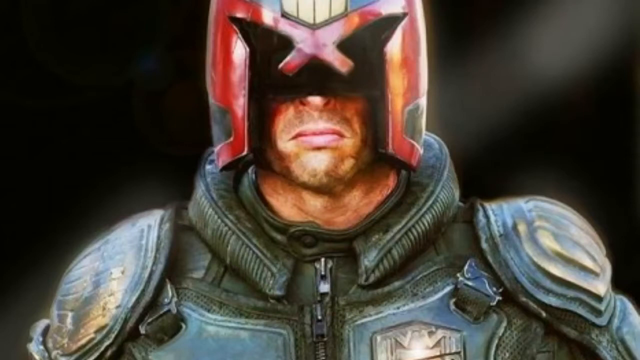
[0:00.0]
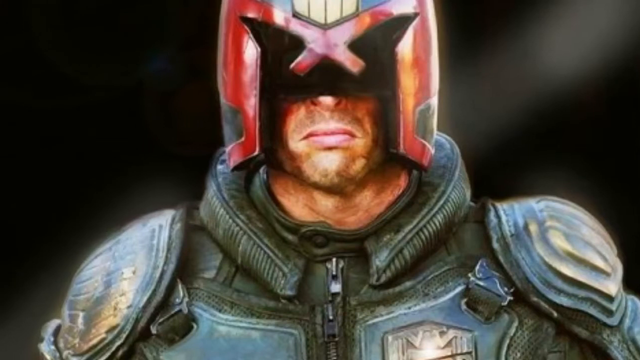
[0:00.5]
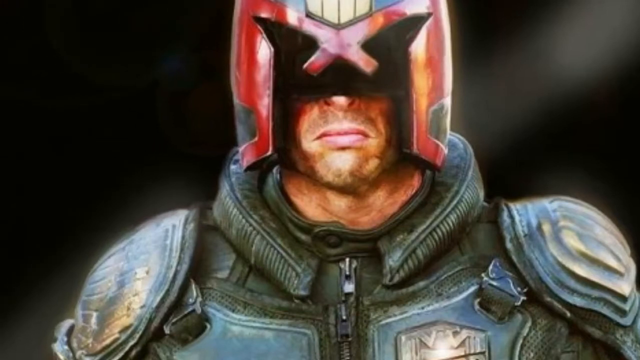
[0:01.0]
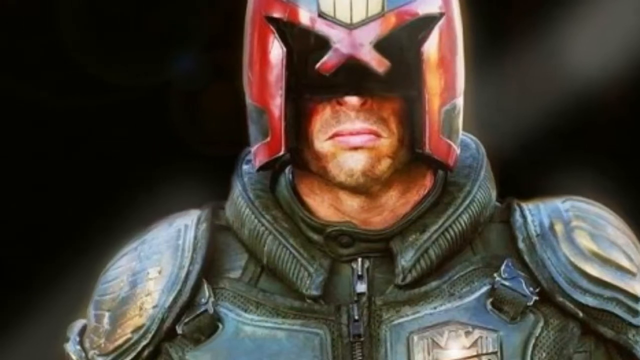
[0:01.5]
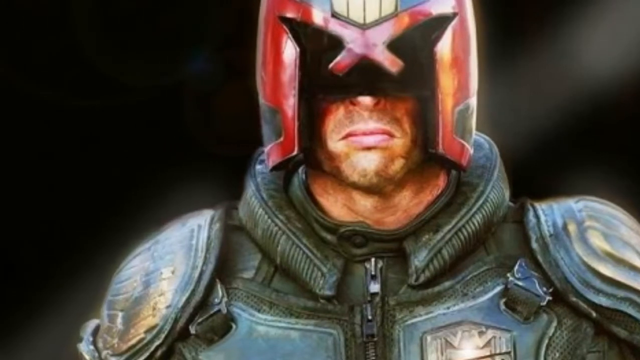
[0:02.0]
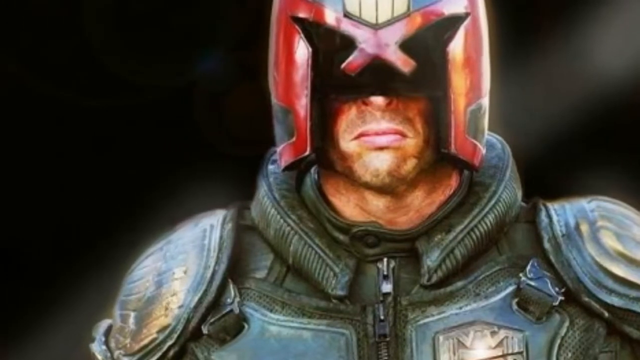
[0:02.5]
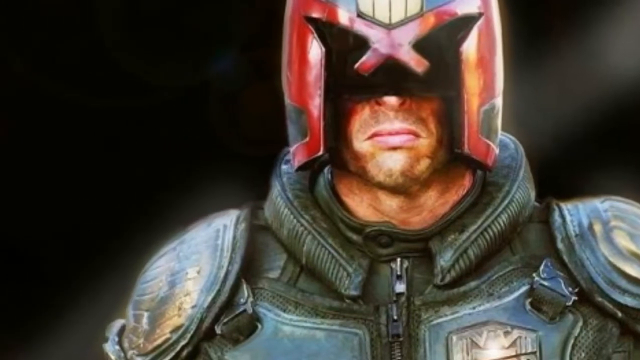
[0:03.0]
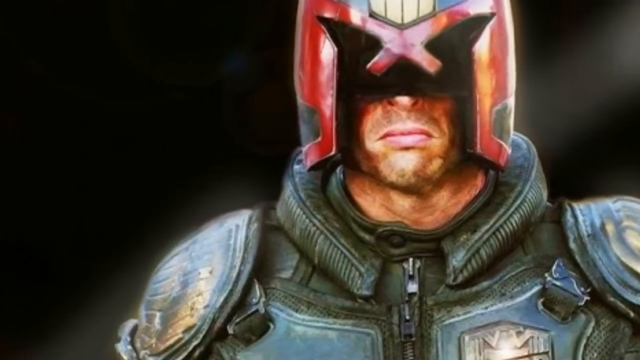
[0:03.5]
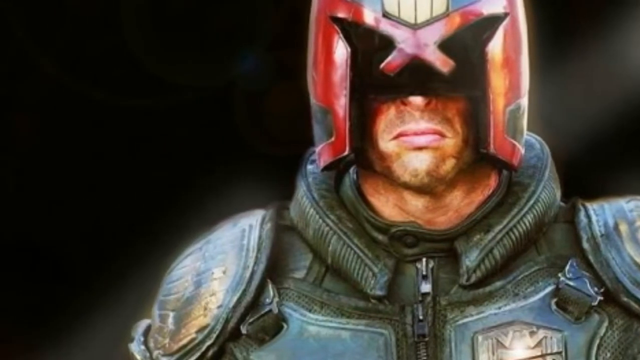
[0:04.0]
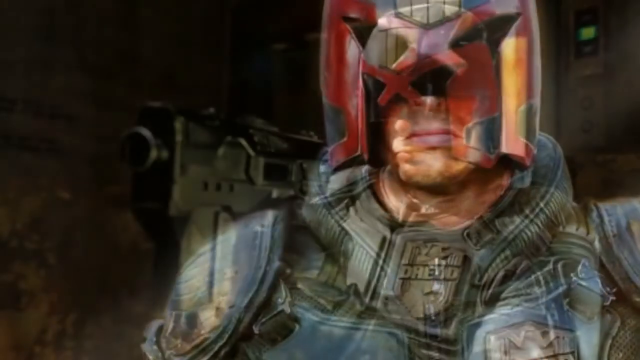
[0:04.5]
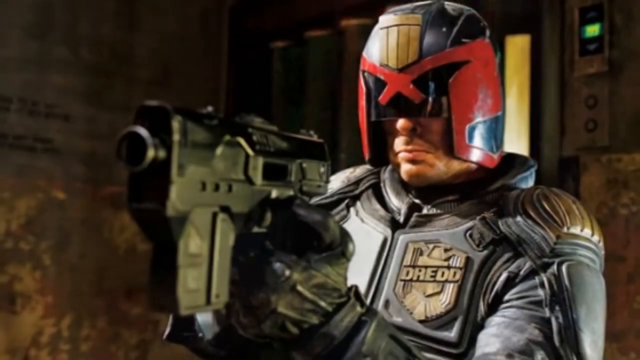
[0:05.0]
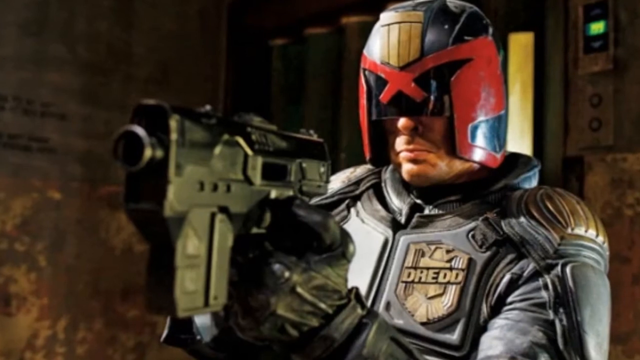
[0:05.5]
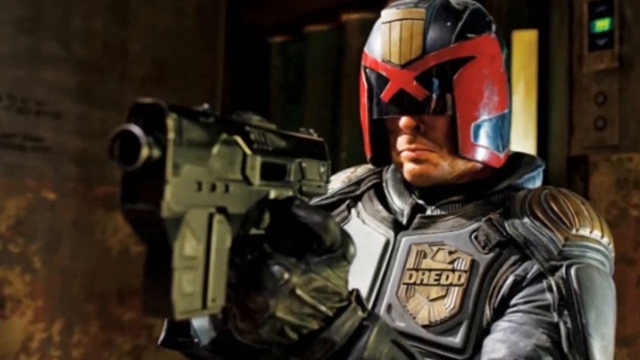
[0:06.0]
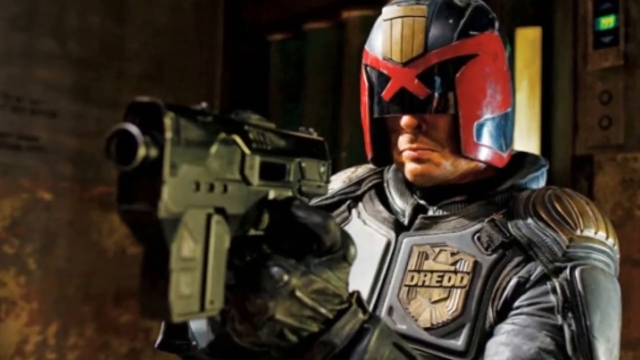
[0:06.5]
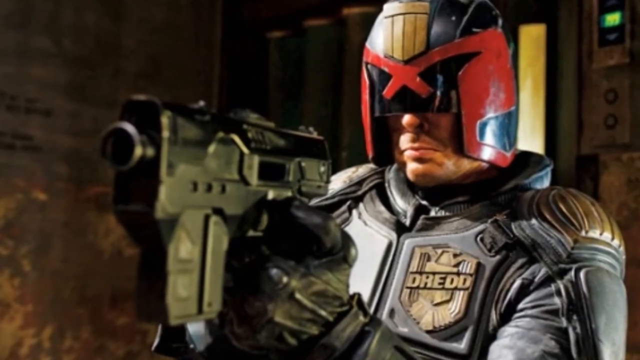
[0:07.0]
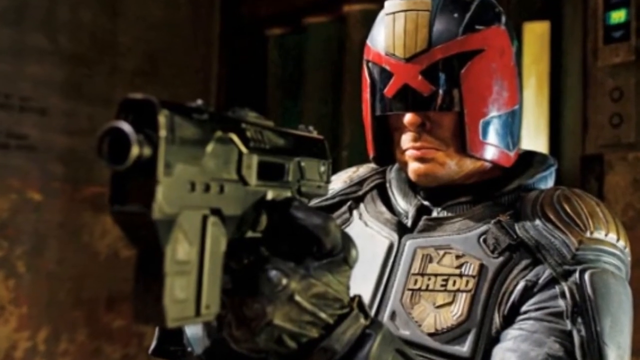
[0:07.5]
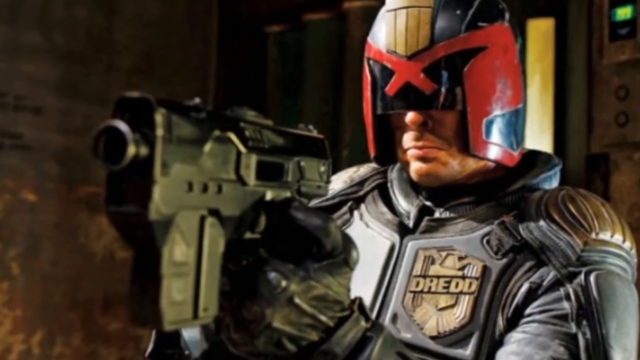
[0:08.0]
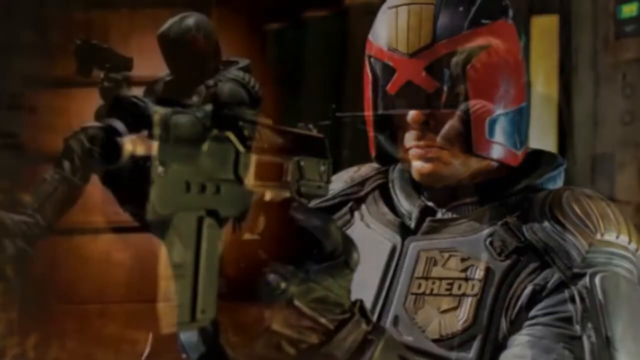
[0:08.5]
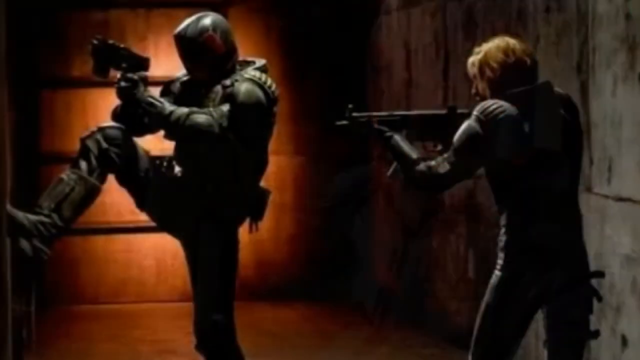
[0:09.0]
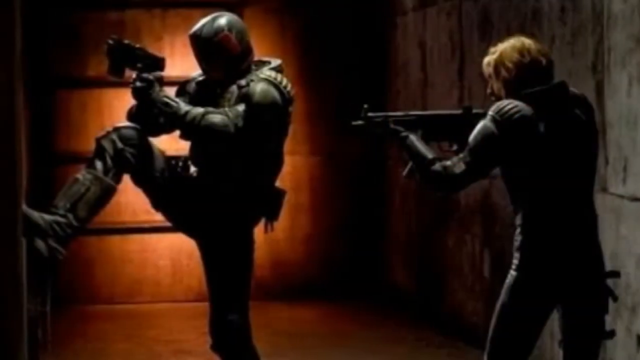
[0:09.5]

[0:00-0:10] A man wears a helmet that the video links to Star Wars and holds a gun, with a sad expression on his face. His costume is from the Star Wars movies, and the footage looks like a scene from a movie, with him acting out part of it.